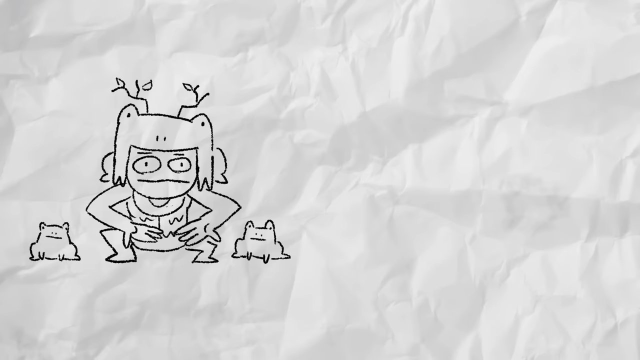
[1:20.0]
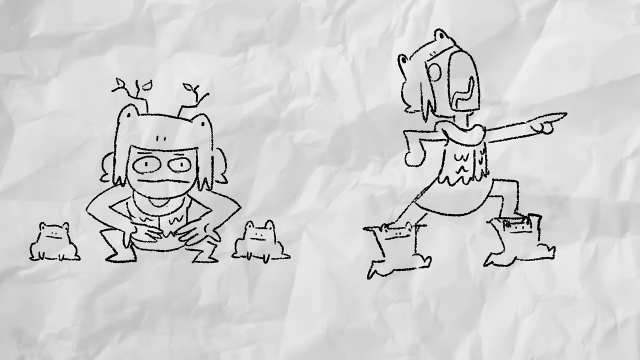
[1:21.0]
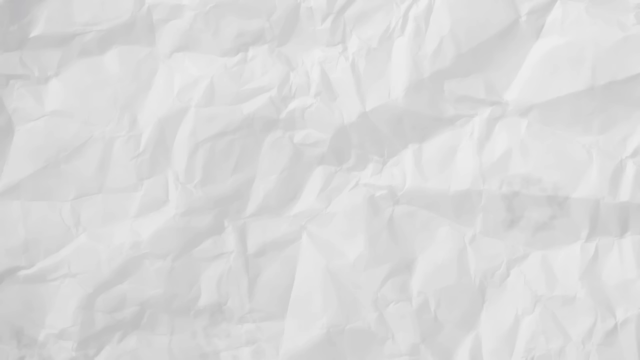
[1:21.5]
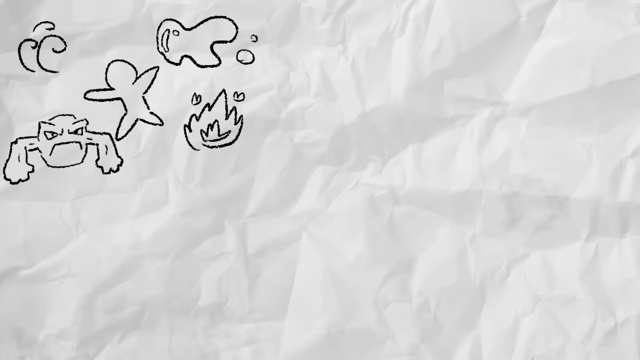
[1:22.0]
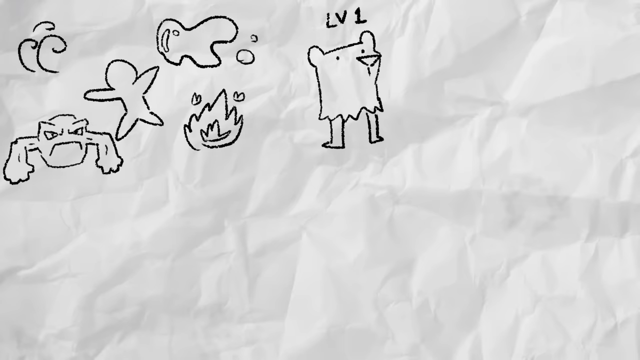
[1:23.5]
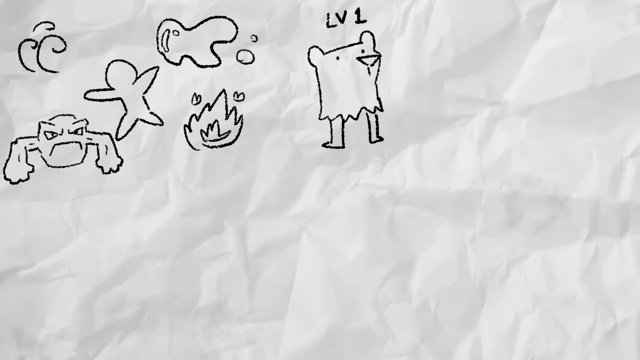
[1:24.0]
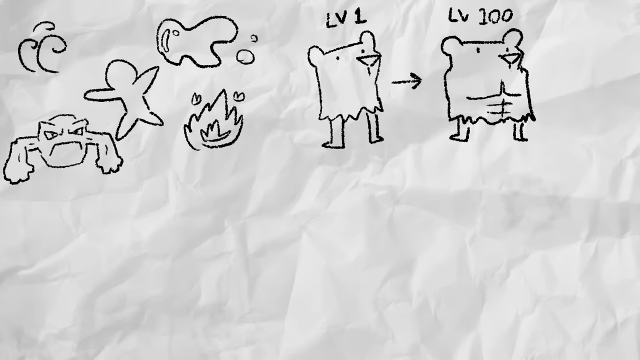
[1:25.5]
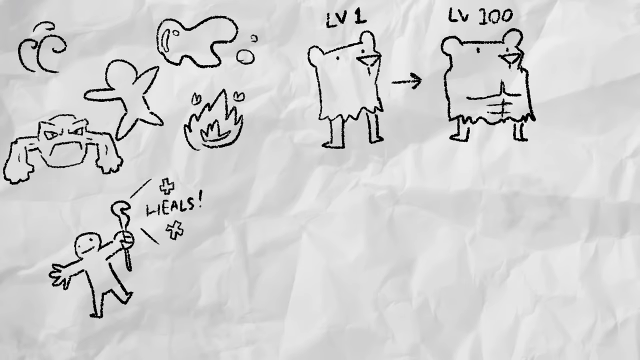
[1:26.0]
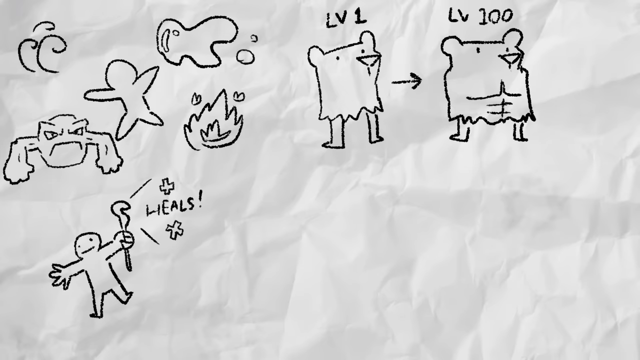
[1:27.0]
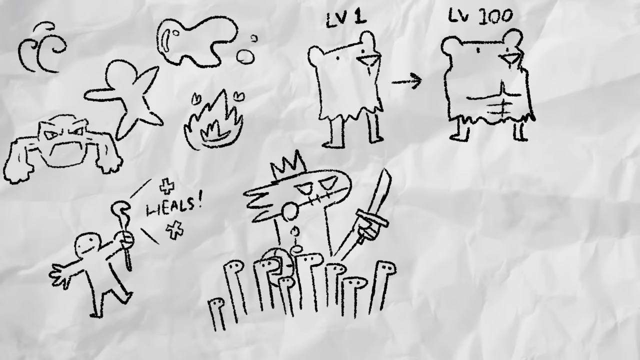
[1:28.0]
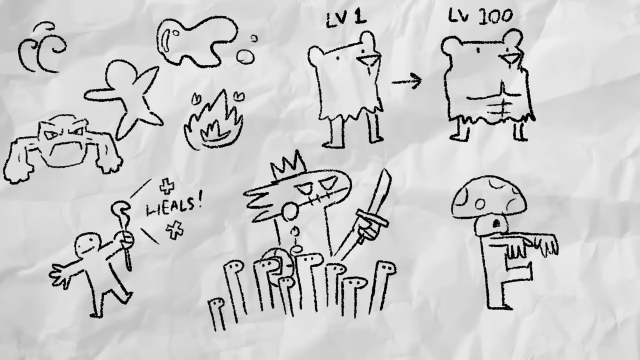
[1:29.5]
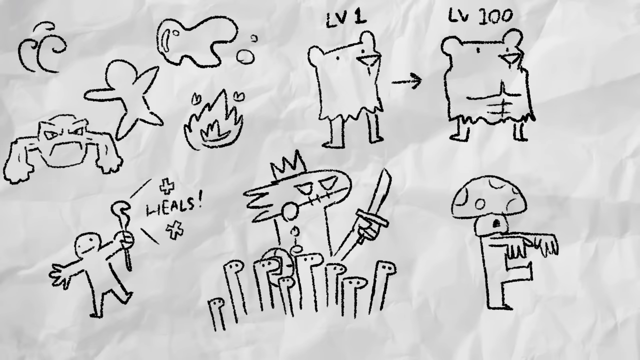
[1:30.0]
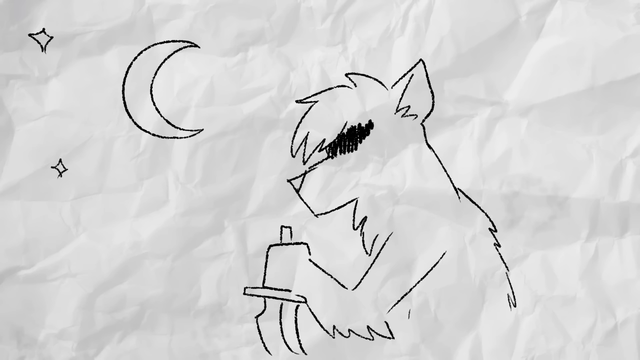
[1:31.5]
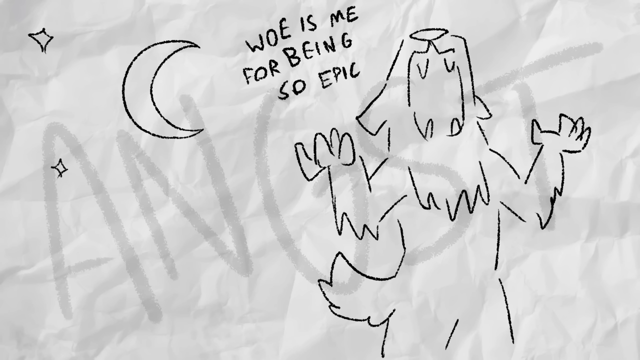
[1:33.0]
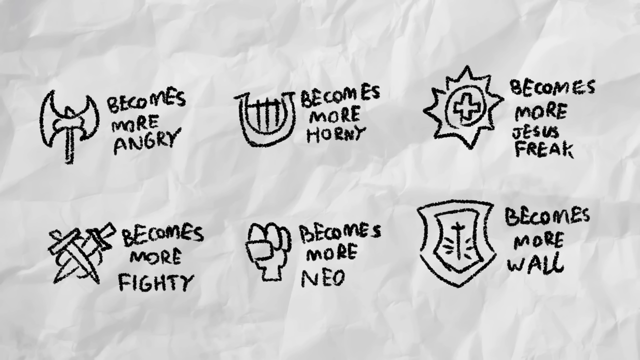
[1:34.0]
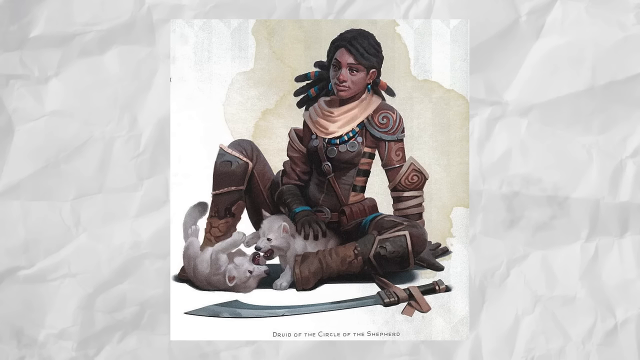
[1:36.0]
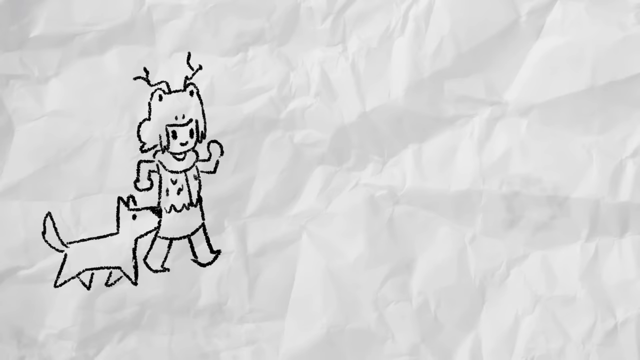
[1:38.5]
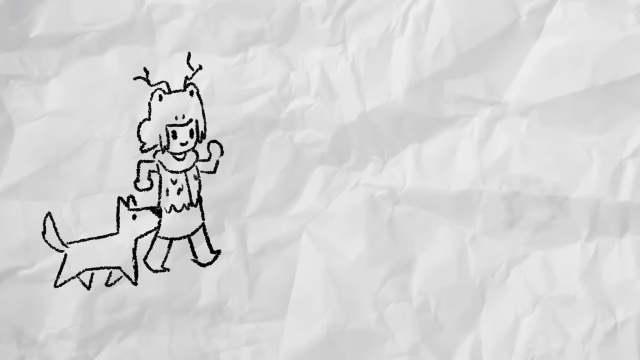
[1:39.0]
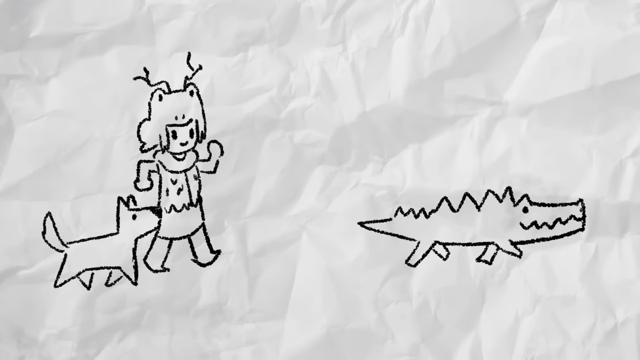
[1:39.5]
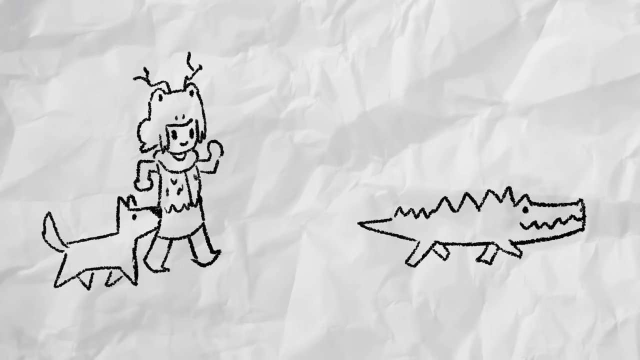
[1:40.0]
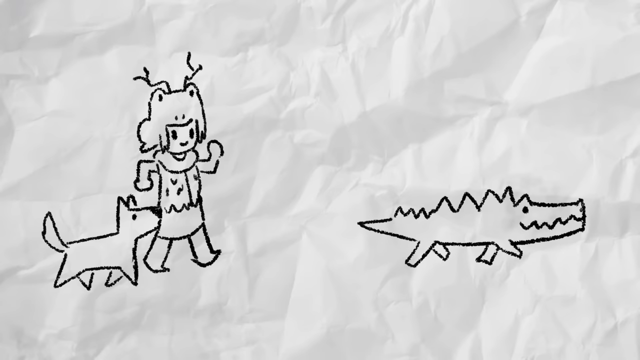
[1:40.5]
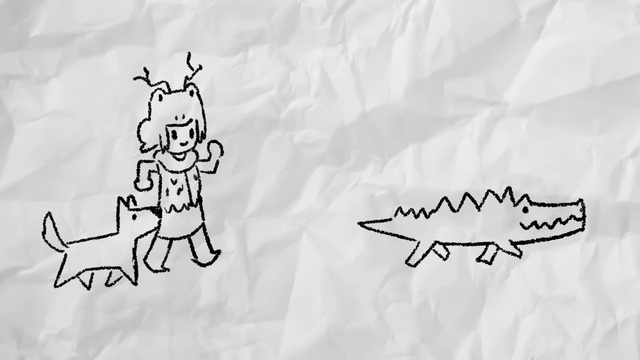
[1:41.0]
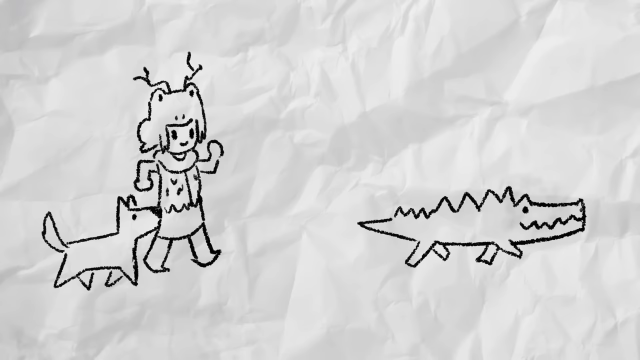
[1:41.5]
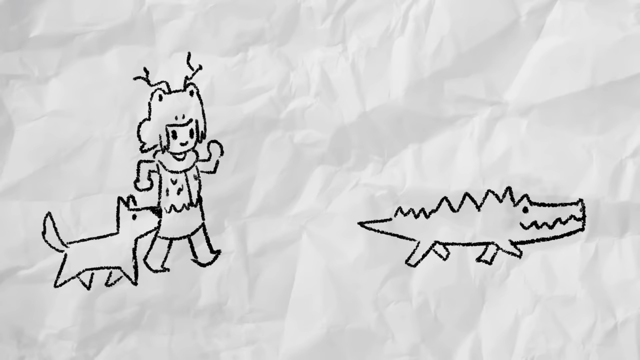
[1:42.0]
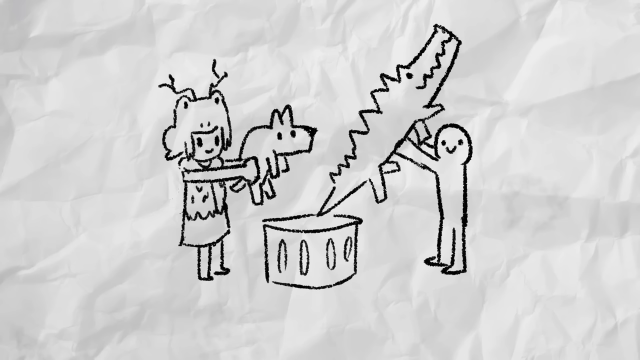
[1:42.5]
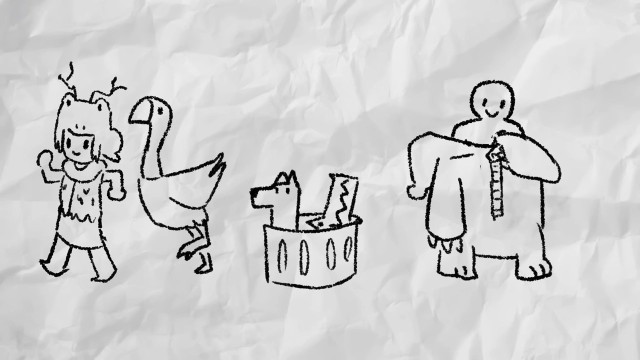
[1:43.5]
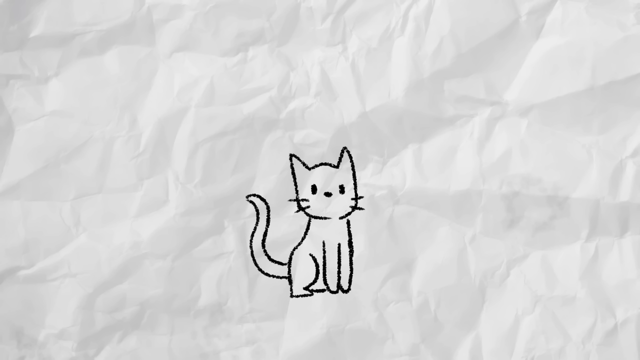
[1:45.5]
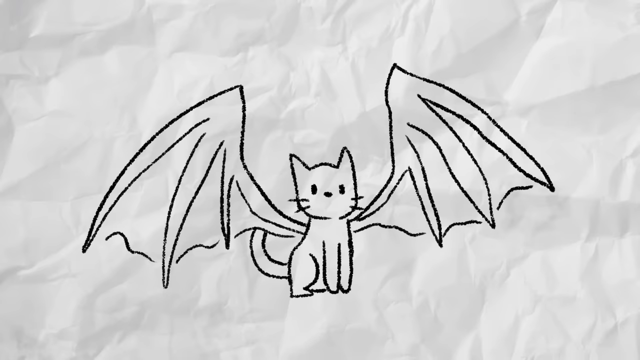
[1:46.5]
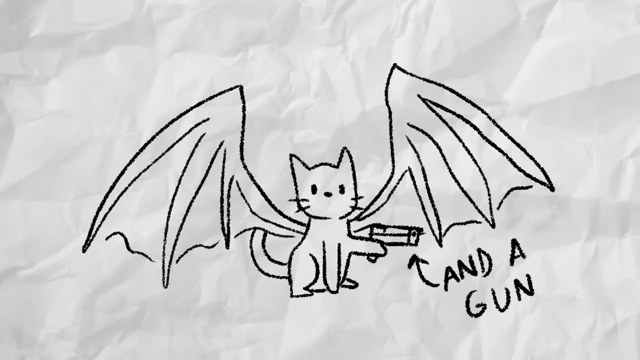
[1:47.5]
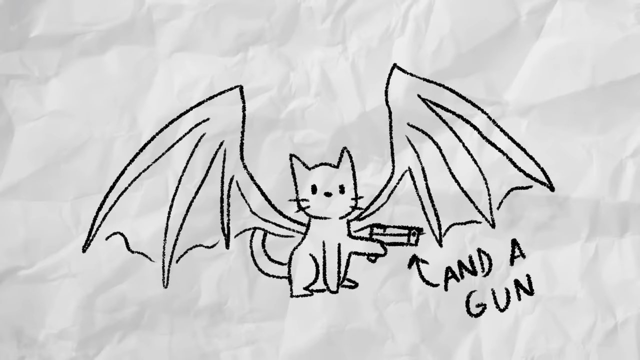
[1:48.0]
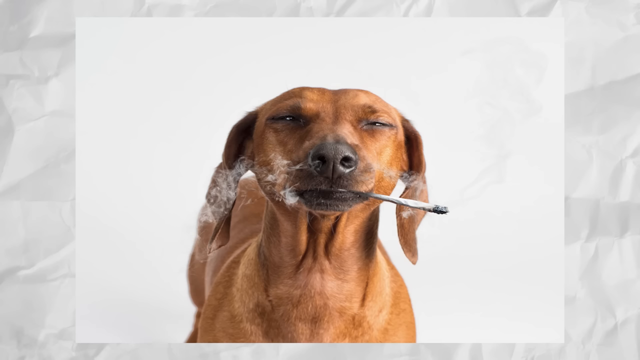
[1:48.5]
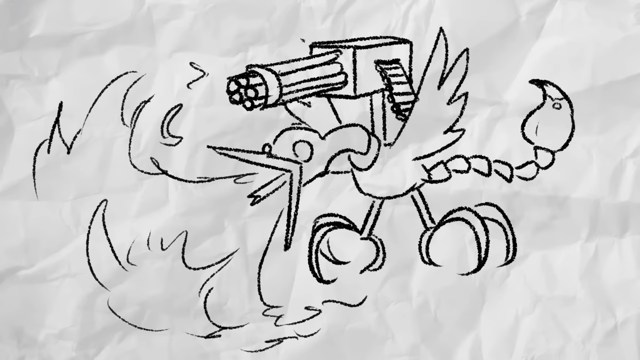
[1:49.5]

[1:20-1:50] A series of random images that look like simple pencil drawings of characters from a game continues, some of them odd and not human-looking. One looks like a creature wearing a frog hat; she appears in two different scenes. There are small images of angry monster creatures and creatures that look like bears. One looks like a dragon wearing a crown and holding a sword, surrounded by smaller, similar creatures. Another looks like a fox or a dog holding a sword in one of his paws, and another shows him howling to the sky with his arms up in the air, with text next to him saying "Woe is me for being so epic." Another shows a cat that grows bat wings, with a gun. Intercut with these are a couple of unrelated images: a color illustration of a woman who looks almost like a Native American, wearing leather armor, sitting on the ground playing with what look like two white wolf cubs; and a photograph of a smoking dog.